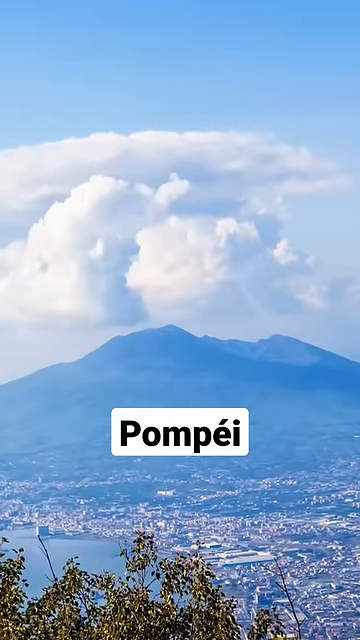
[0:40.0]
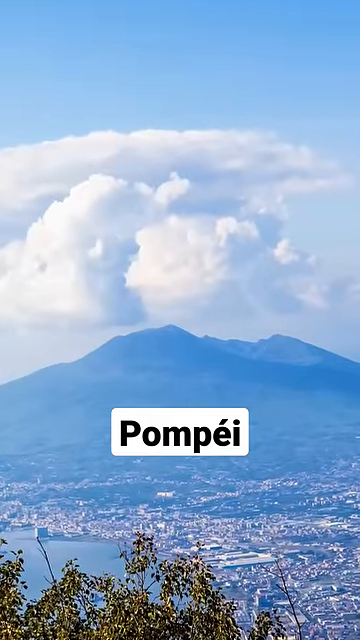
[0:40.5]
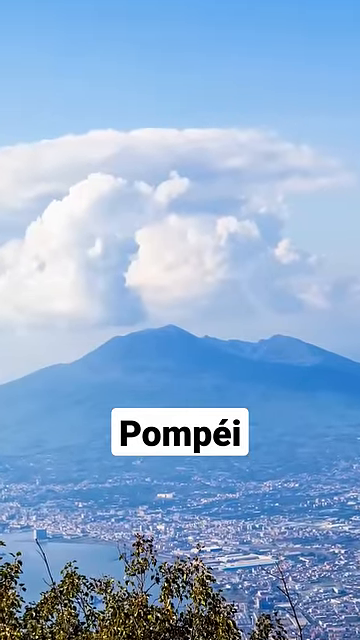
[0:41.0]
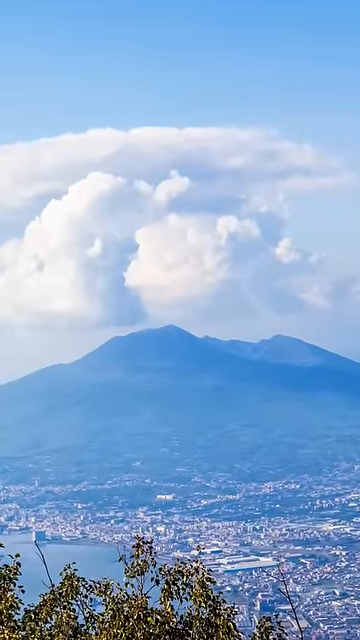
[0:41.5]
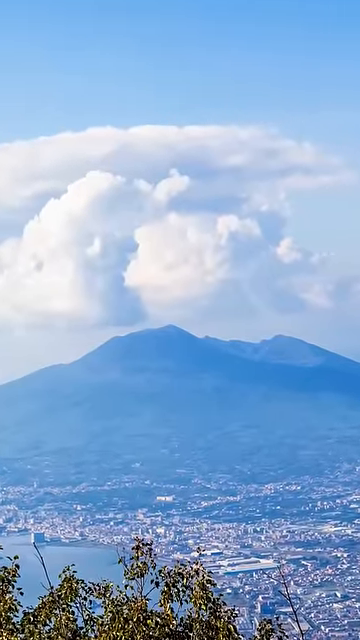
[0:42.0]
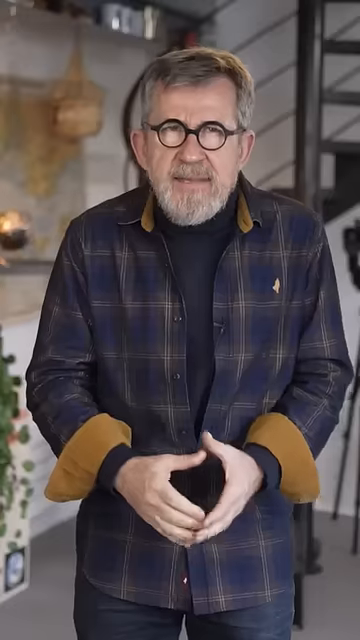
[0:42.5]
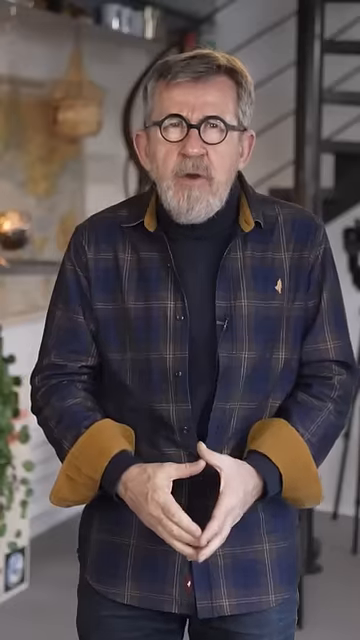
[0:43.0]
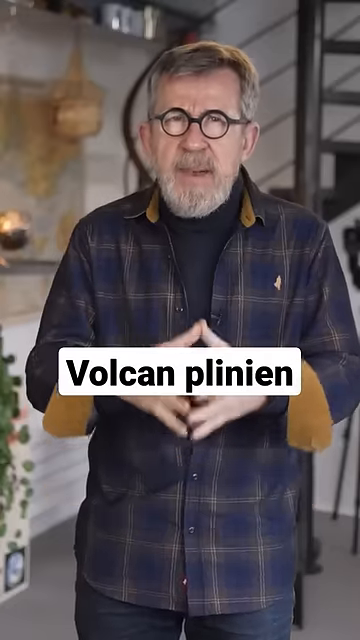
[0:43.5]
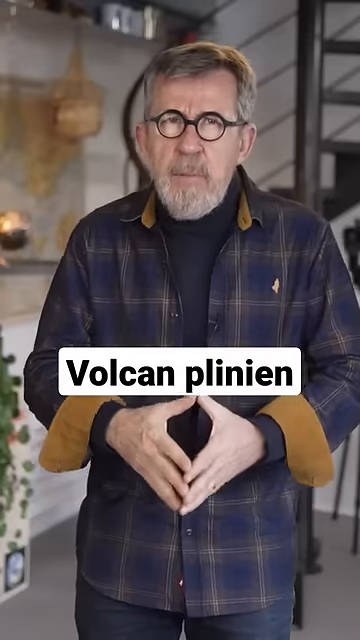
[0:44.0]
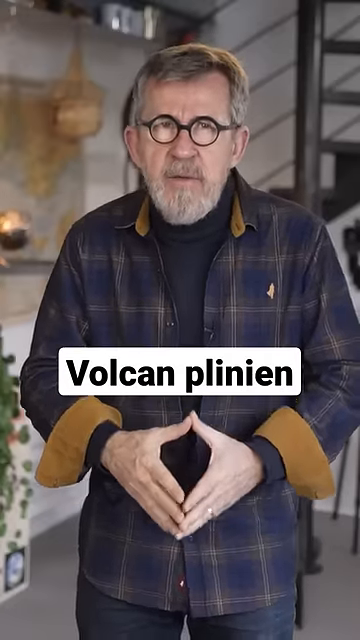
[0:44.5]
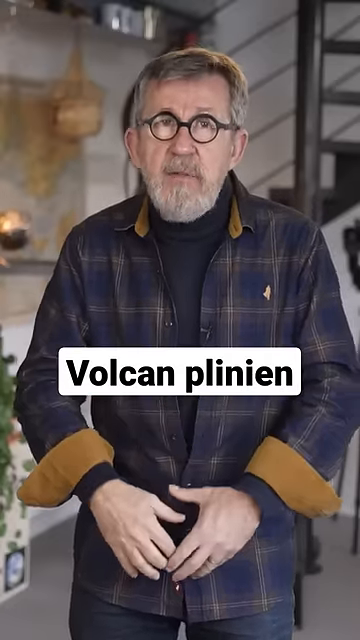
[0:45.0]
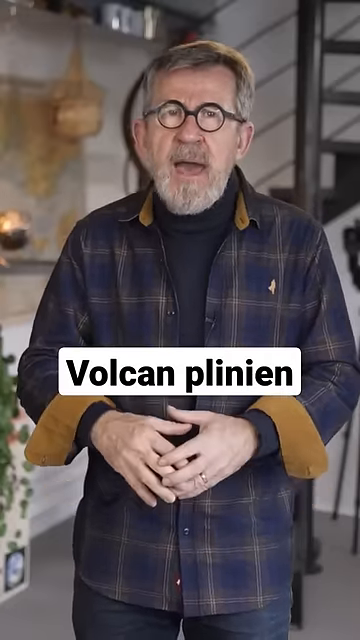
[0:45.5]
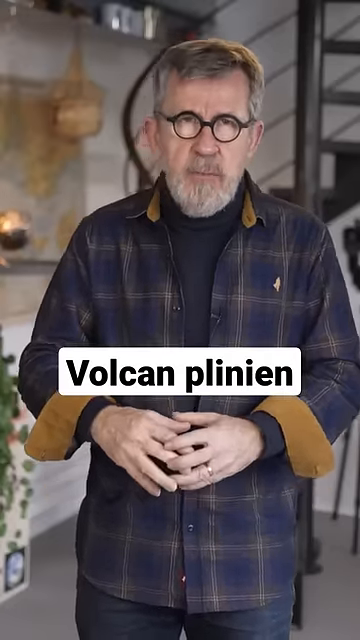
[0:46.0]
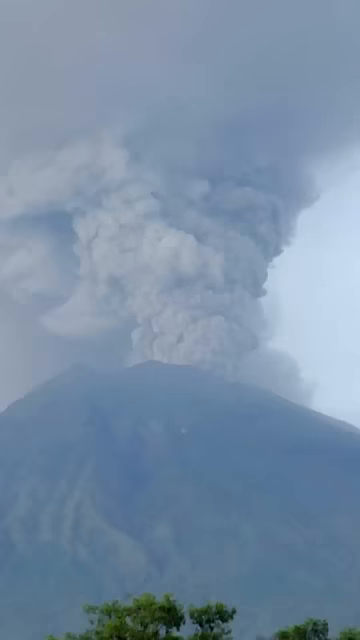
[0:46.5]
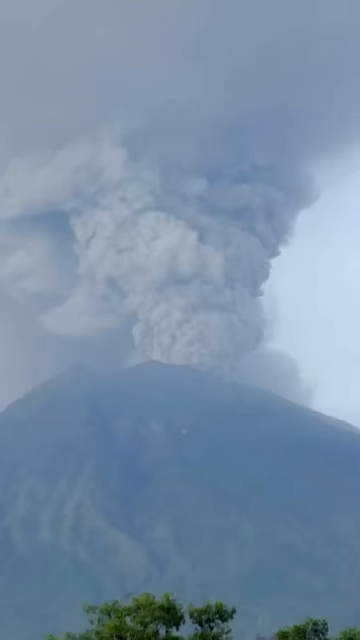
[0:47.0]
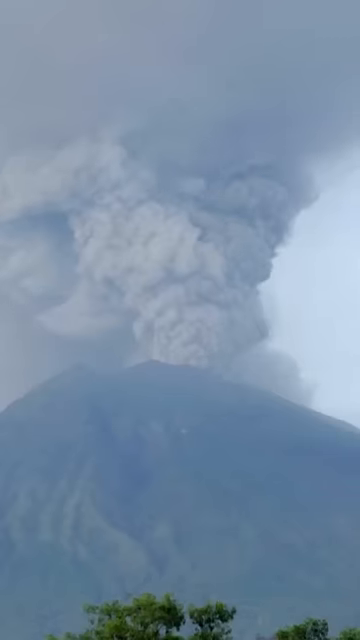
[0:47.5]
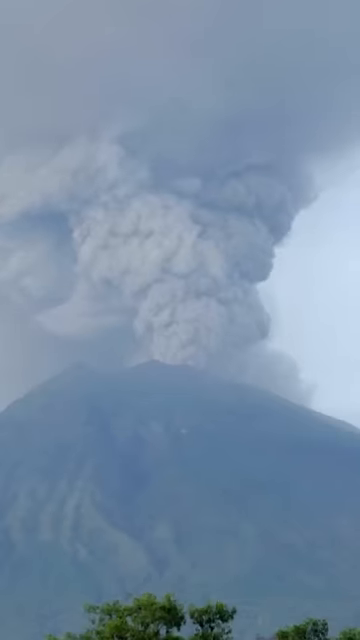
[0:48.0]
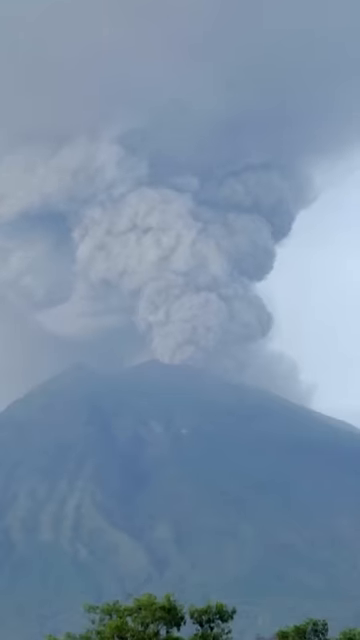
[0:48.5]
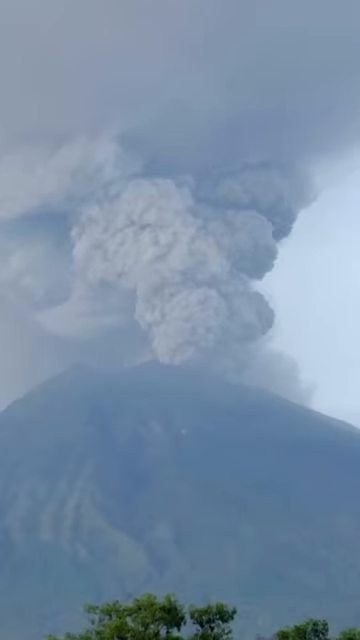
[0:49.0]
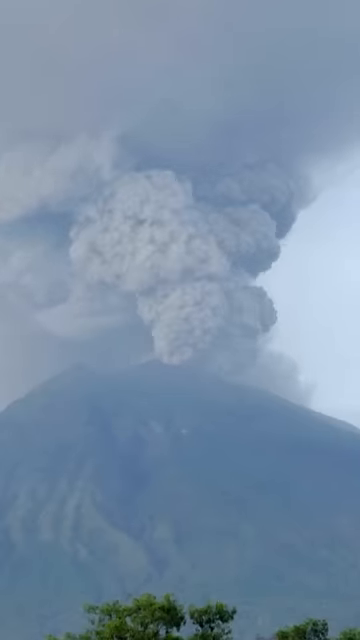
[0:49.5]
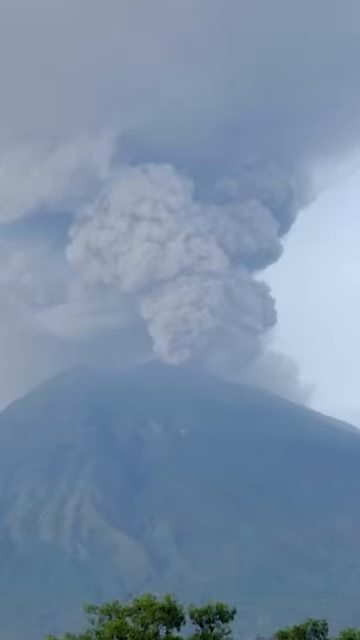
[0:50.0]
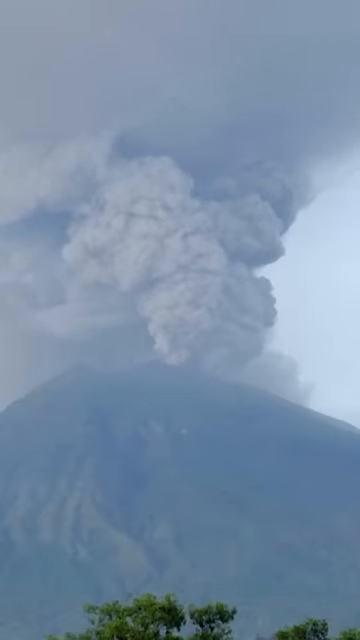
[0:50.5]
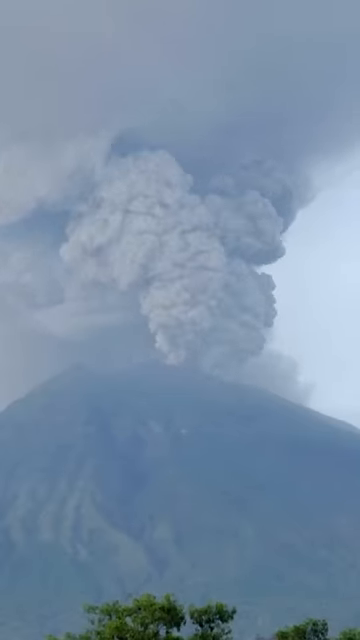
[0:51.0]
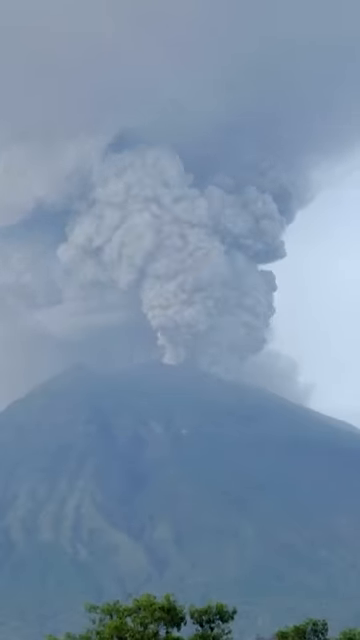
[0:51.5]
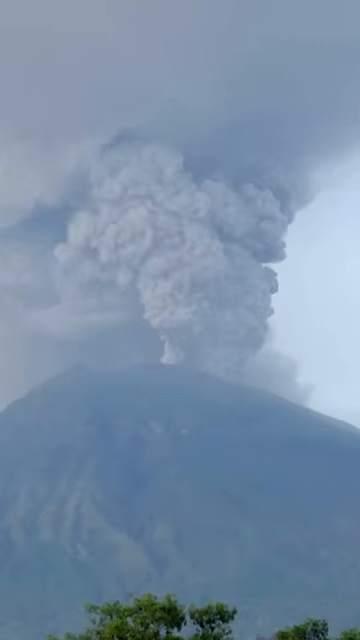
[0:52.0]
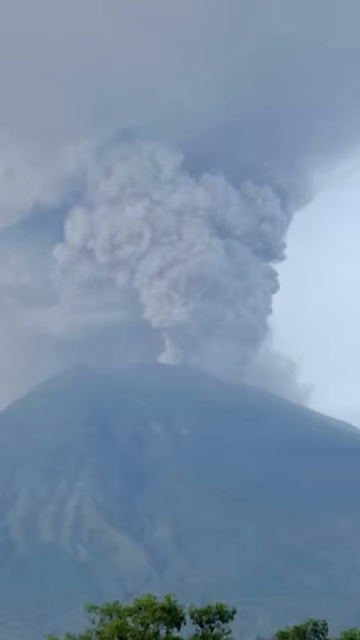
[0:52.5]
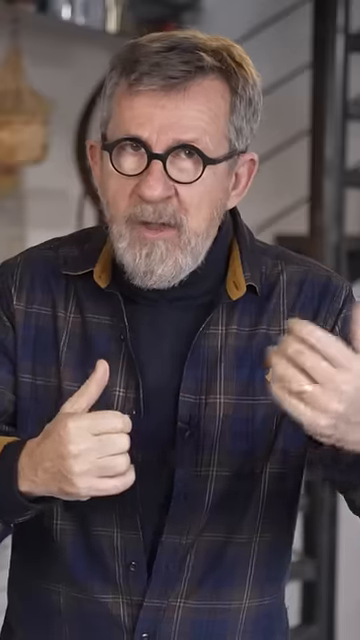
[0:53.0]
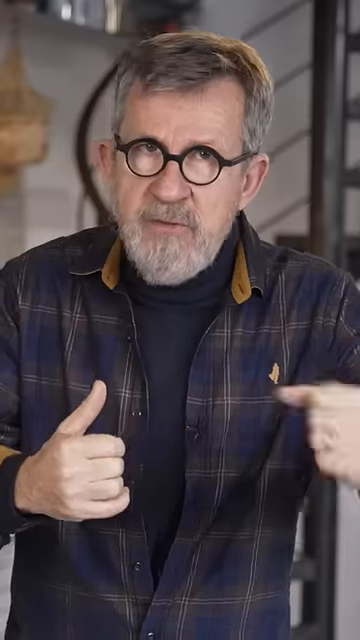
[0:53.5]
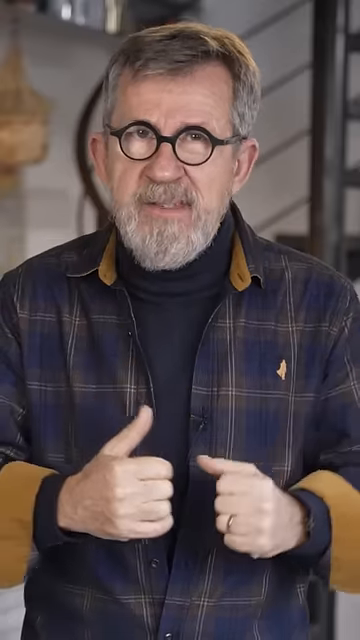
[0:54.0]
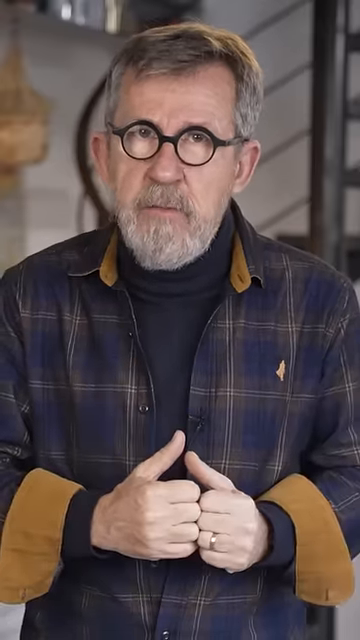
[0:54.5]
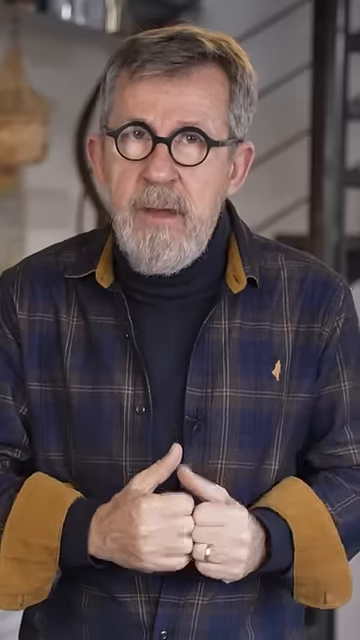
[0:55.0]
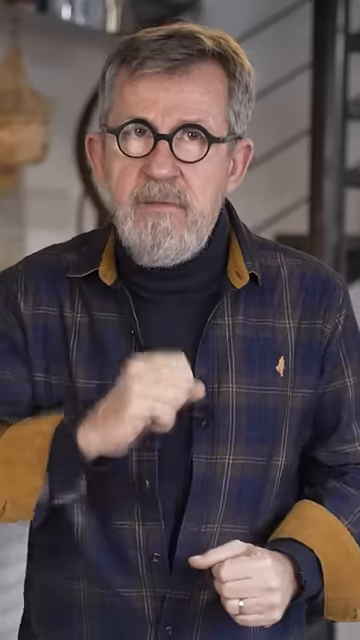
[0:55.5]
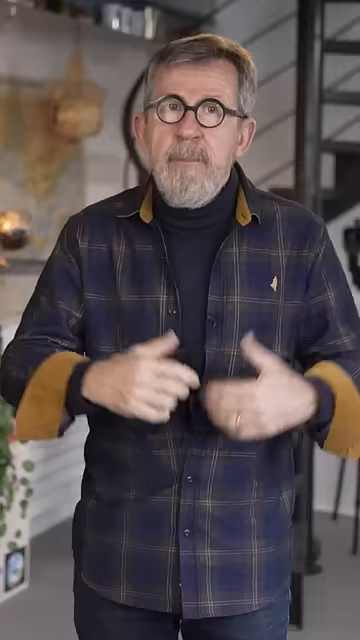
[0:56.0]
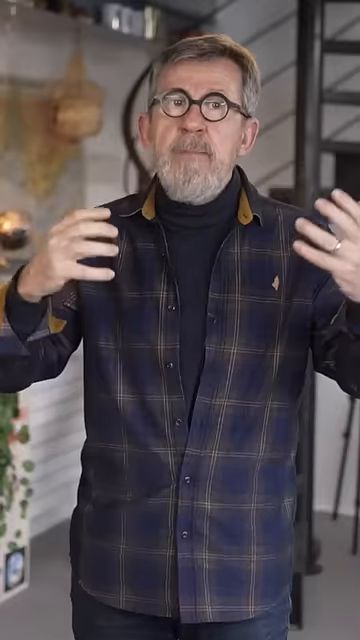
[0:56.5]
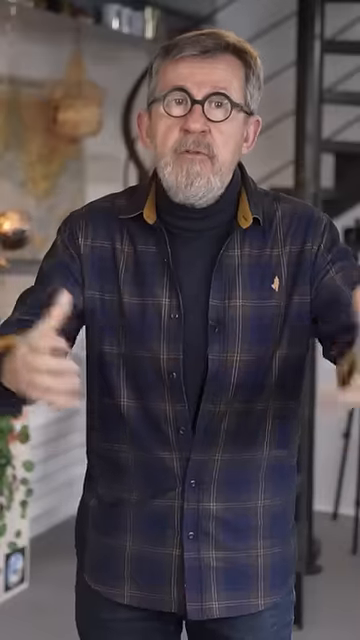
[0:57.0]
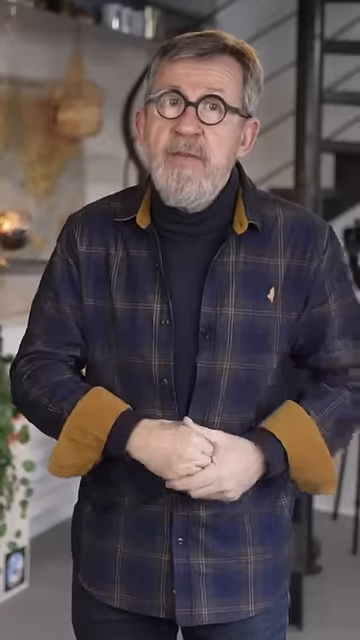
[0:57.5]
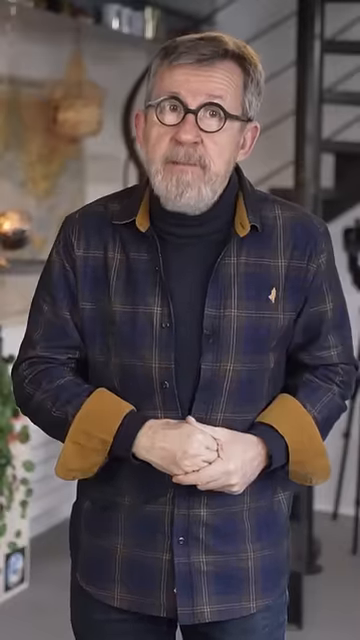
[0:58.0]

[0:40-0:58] An old volcanic eruption from Pompeii is shown, followed by more recent volcanic activity; this part focuses mainly on volcanic activity. The video then cuts back to the man, who is relatively low energy, not that excited and seemingly subdued.